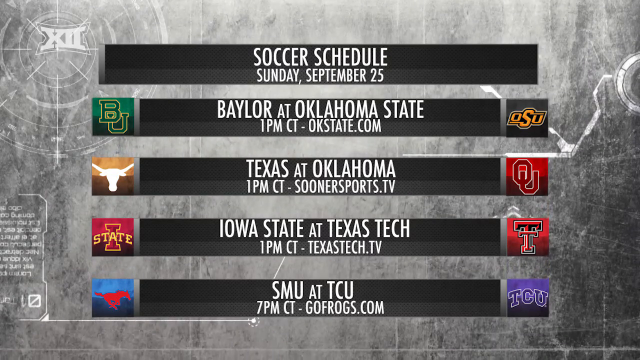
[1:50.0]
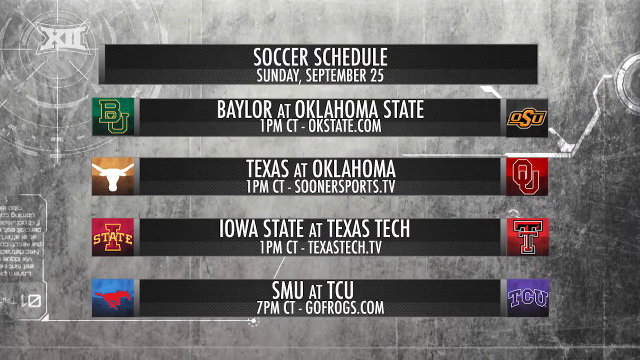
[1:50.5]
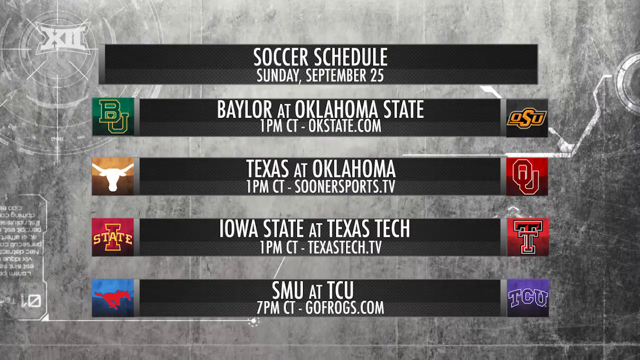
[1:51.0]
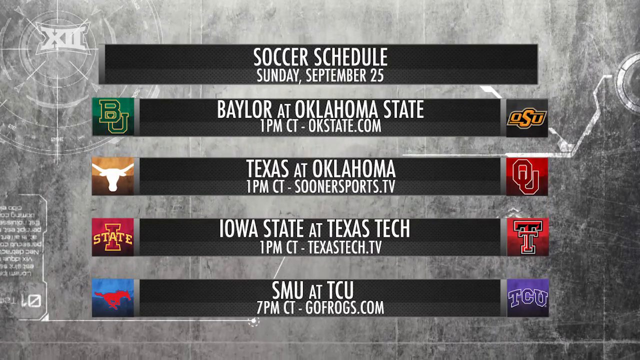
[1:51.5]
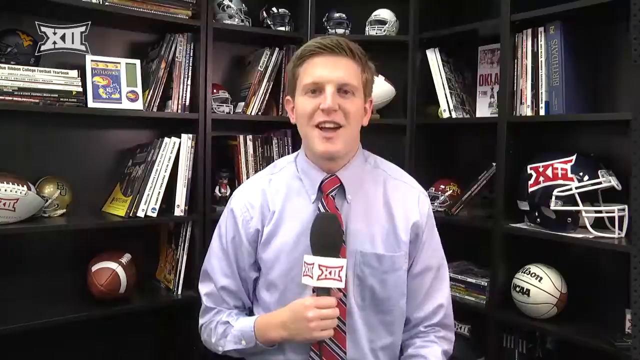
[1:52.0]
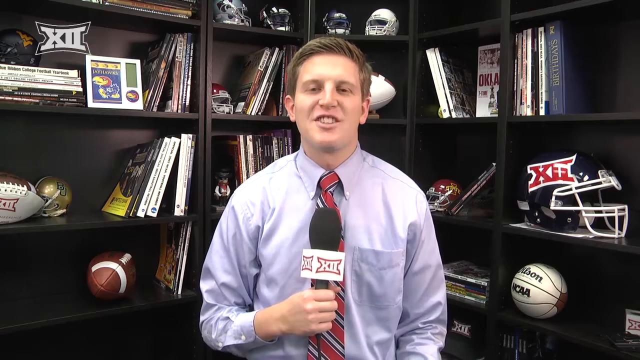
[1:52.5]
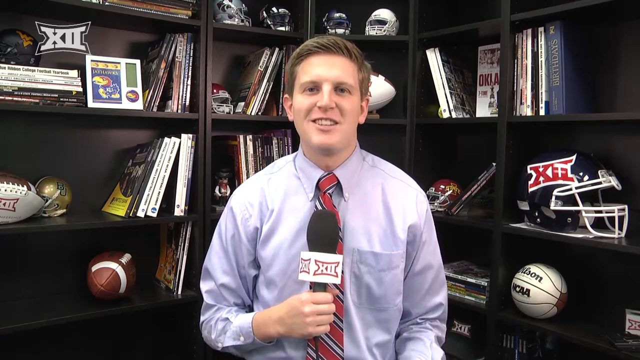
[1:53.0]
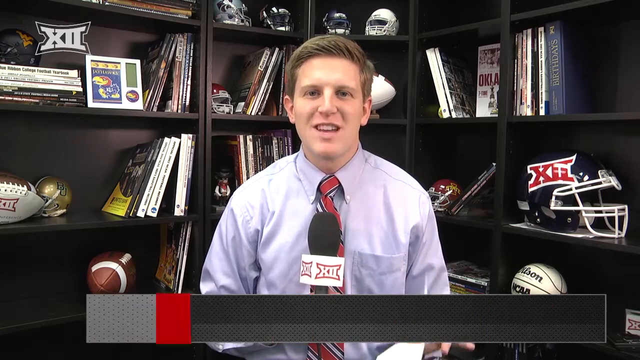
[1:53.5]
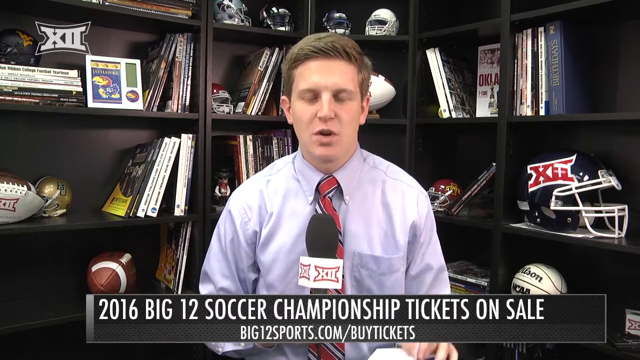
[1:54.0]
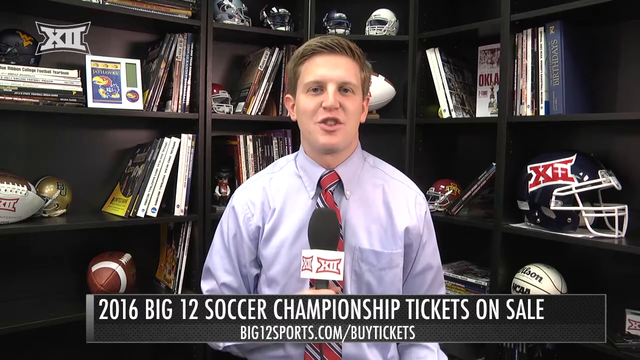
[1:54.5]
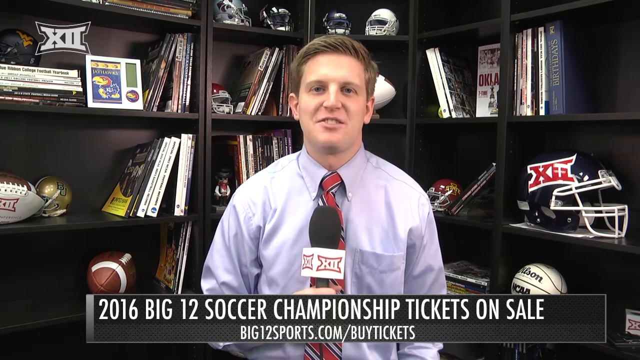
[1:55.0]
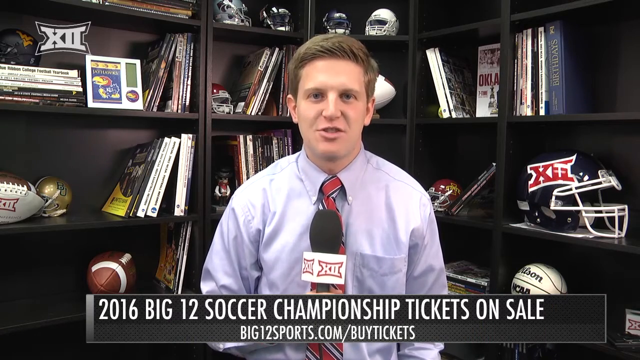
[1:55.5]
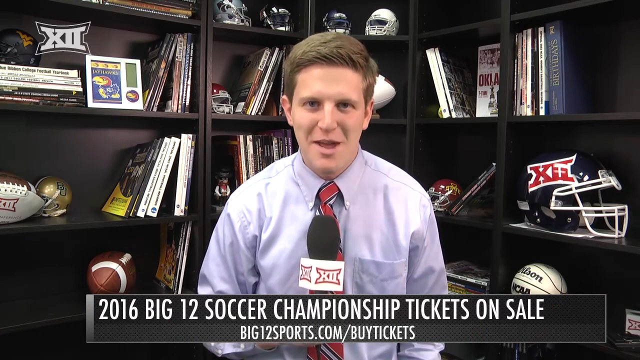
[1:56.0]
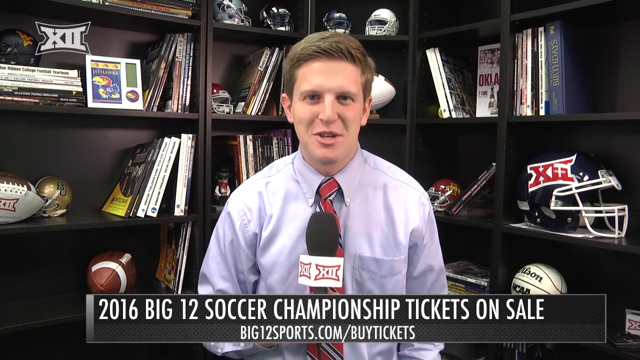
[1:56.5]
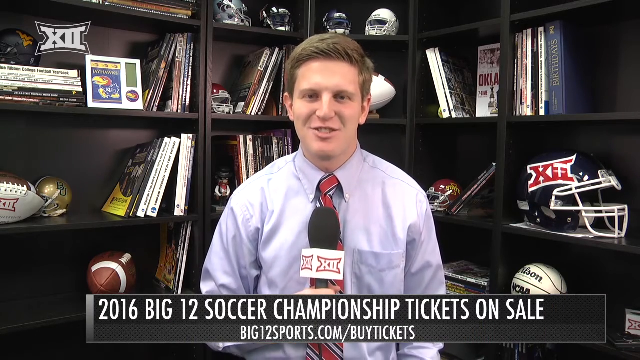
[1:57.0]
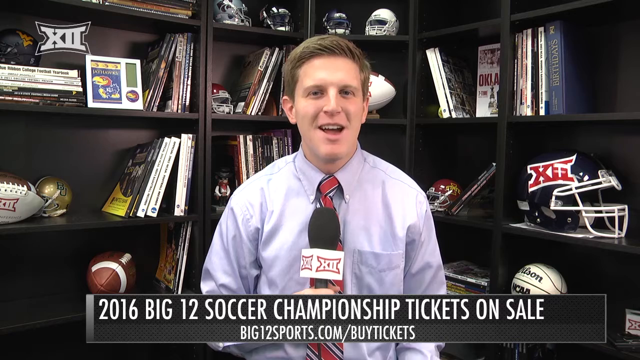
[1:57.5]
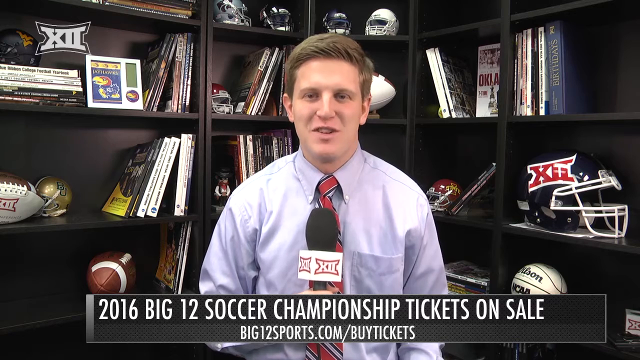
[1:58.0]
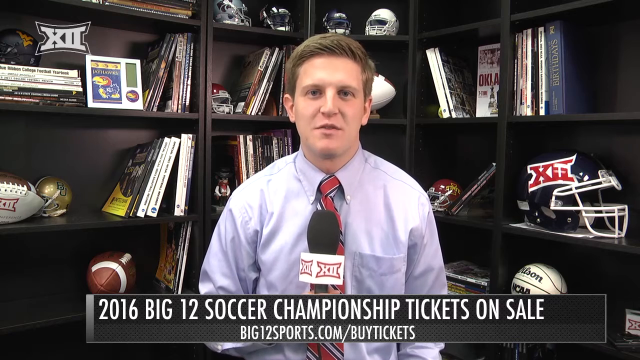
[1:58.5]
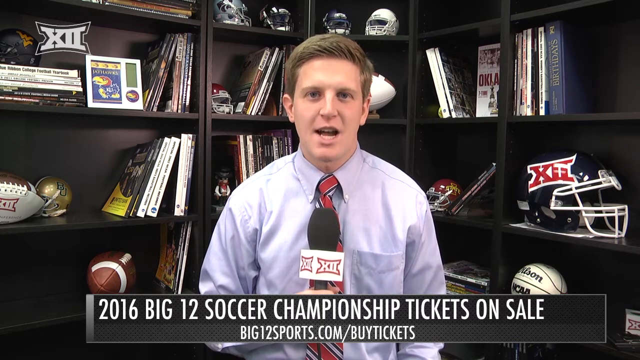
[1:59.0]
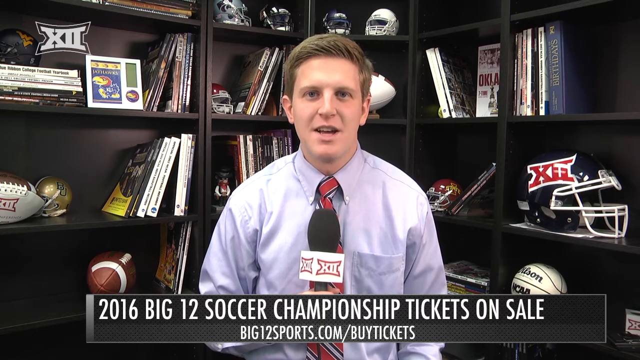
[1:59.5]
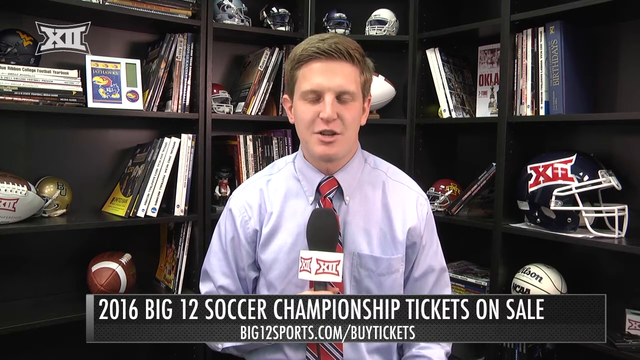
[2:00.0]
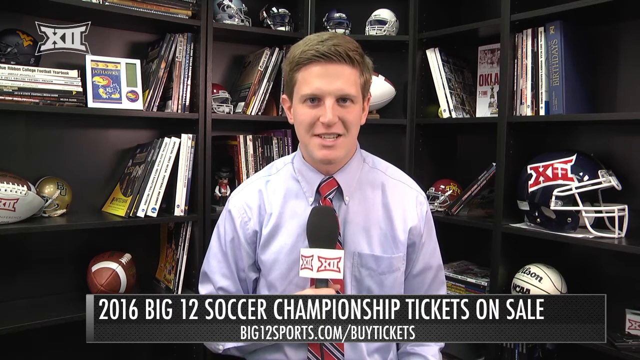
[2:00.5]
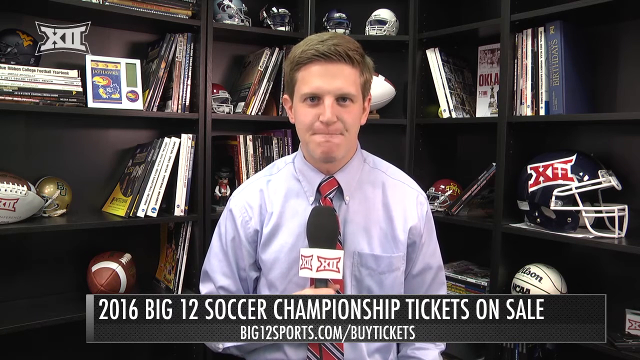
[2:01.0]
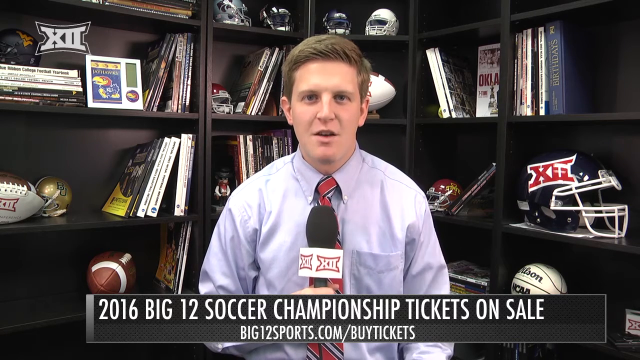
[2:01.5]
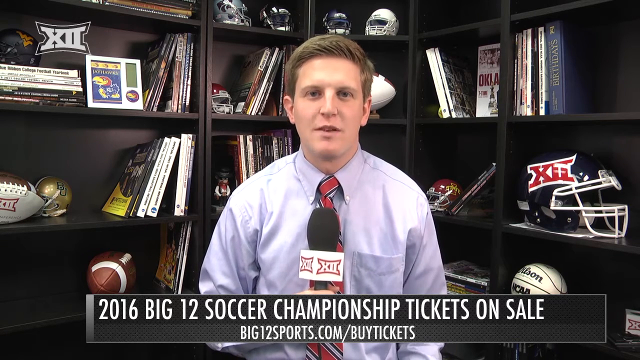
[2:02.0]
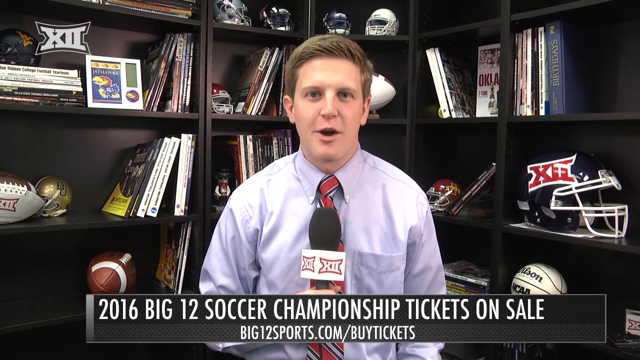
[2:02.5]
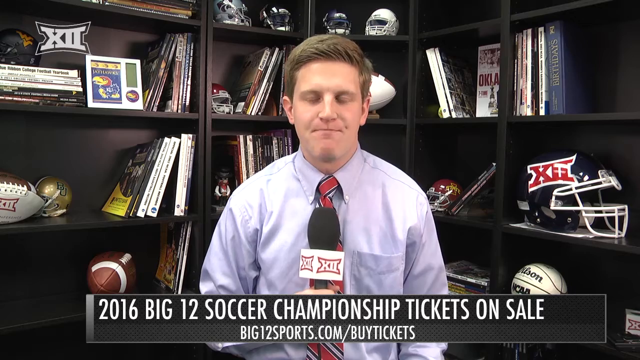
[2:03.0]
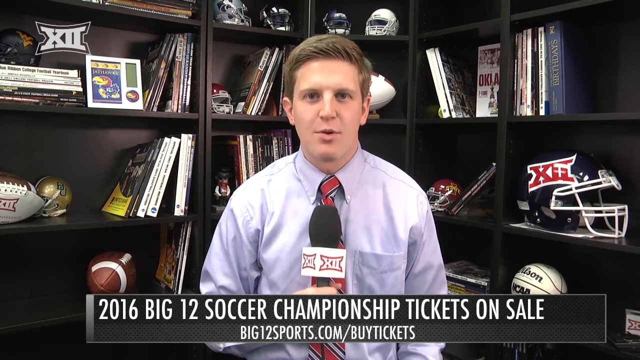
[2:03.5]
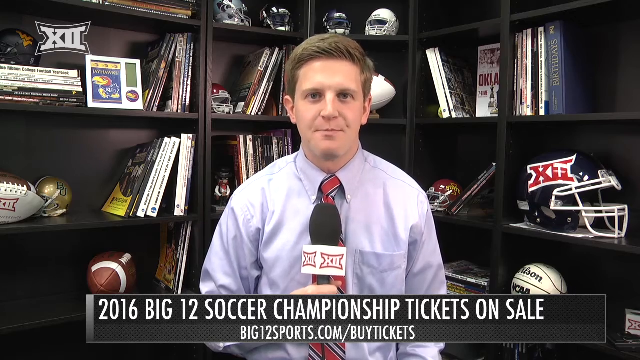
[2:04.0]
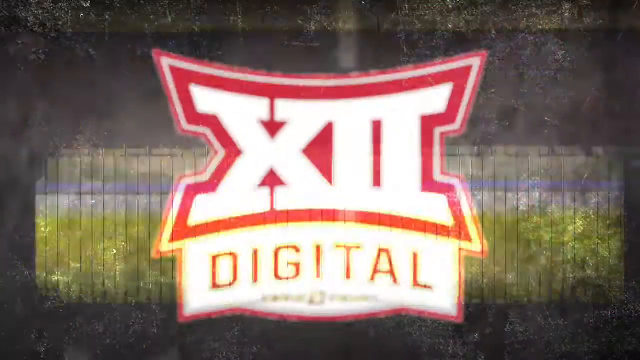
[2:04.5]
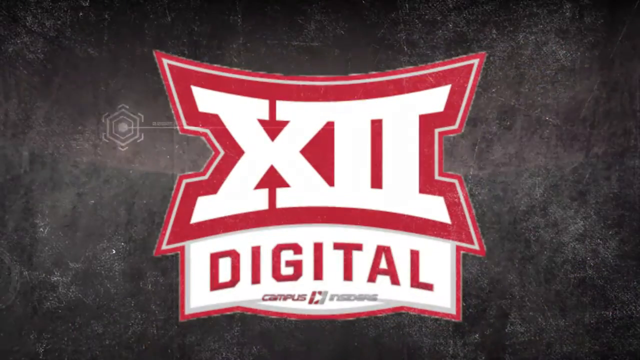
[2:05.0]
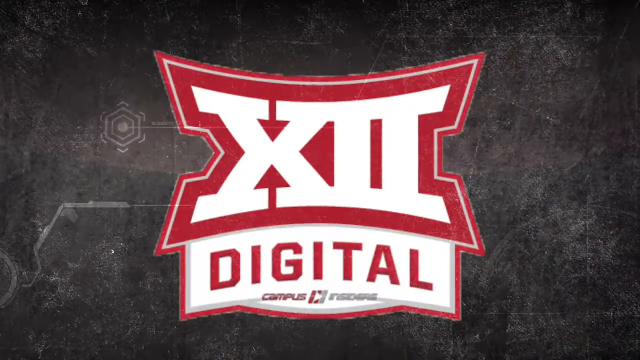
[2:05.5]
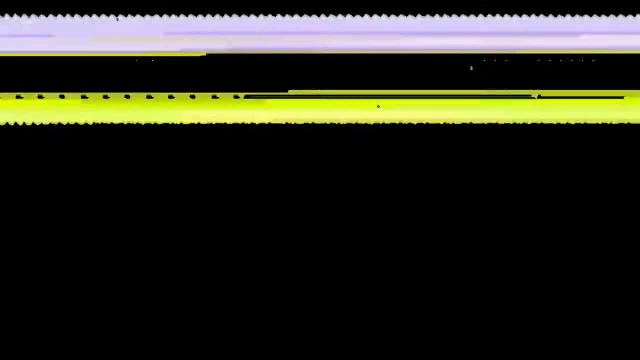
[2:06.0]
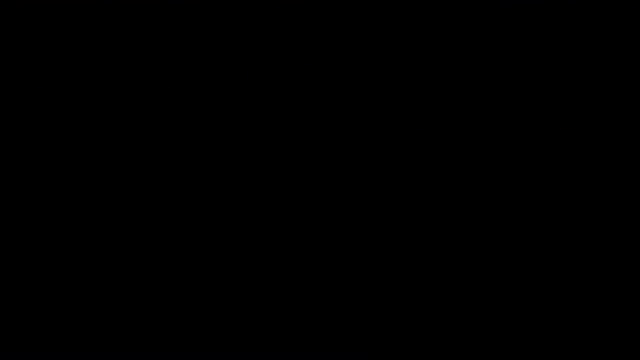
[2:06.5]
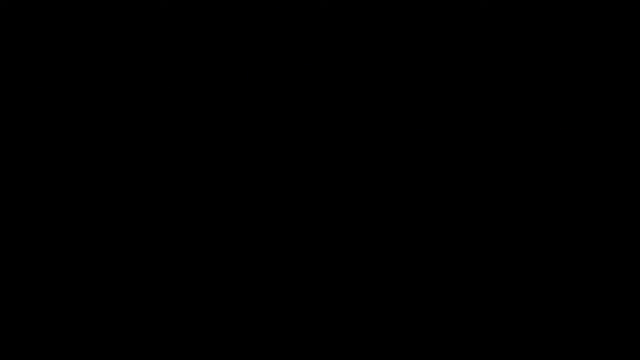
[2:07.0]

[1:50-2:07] The soccer schedule continues with Sunday, September 25th: Baylor at Oklahoma State at 1 p.m. CT, followed by a dash and "Oklahoma State University"; Texas at Oklahoma at 1 p.m. CT; Iowa State at Texas Tech at 1 p.m. CT; and SMU at TCU at 7 p.m. CT. The man, apparently Aaron Pryor, then reappears talking with the microphone in his right hand while facing the camera. Text says "2016 Big 12 soccer championship tickets" are on sale, available at "big12sports.com/buy tickets". He continues talking to the camera, and then text reading something like "12 digital" appears.